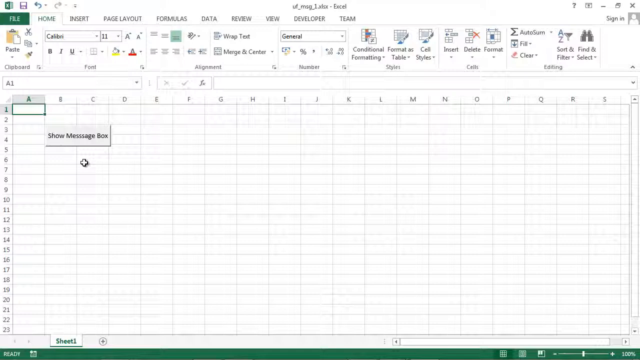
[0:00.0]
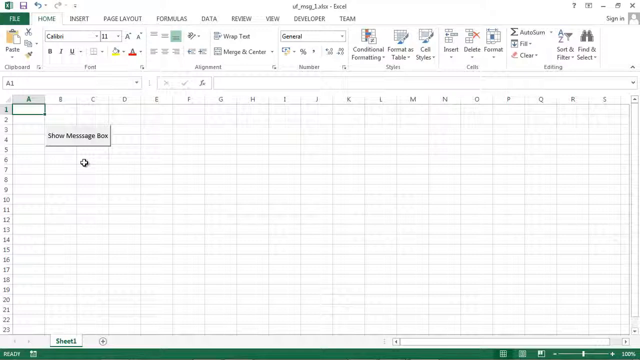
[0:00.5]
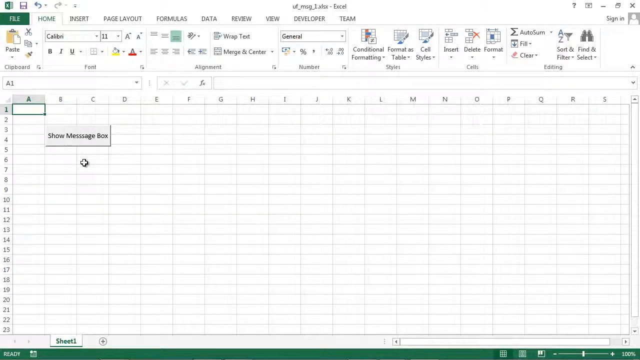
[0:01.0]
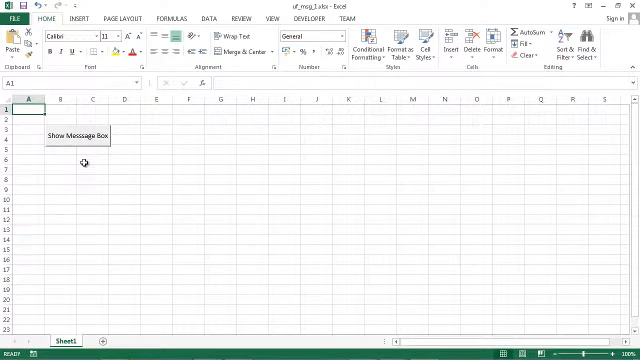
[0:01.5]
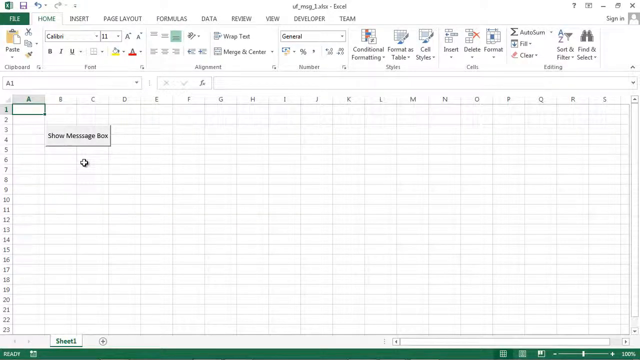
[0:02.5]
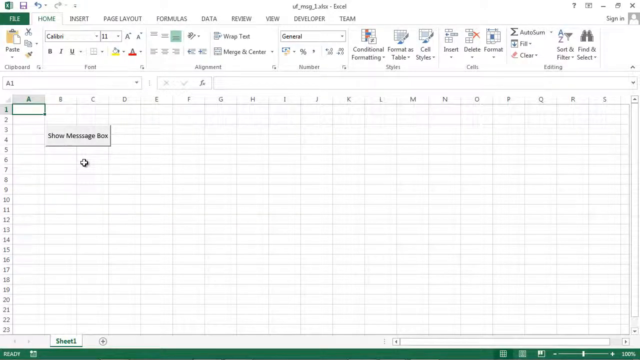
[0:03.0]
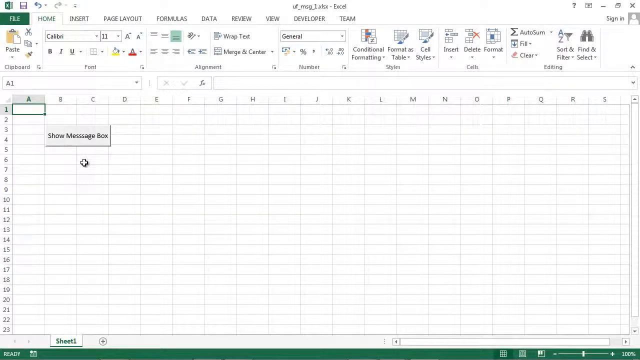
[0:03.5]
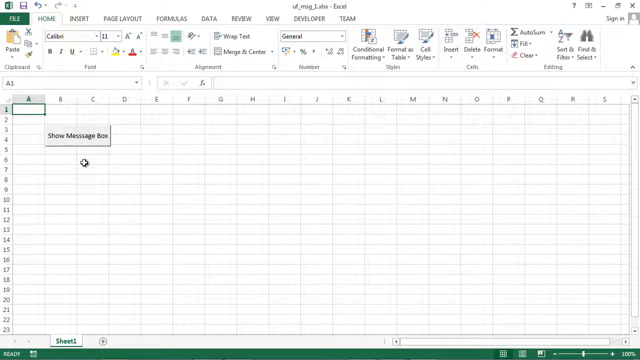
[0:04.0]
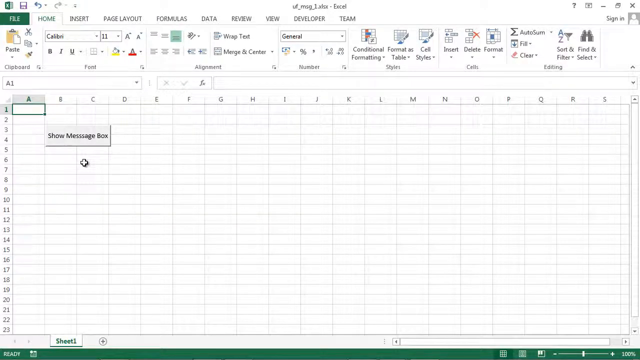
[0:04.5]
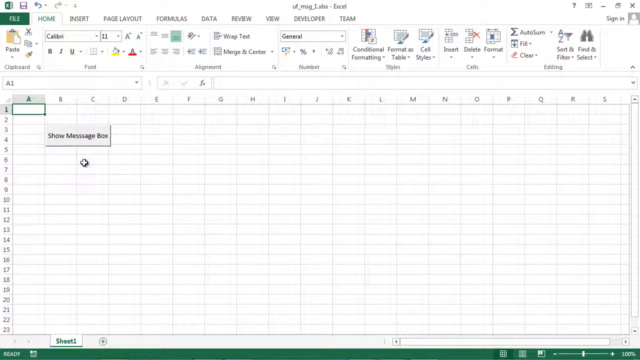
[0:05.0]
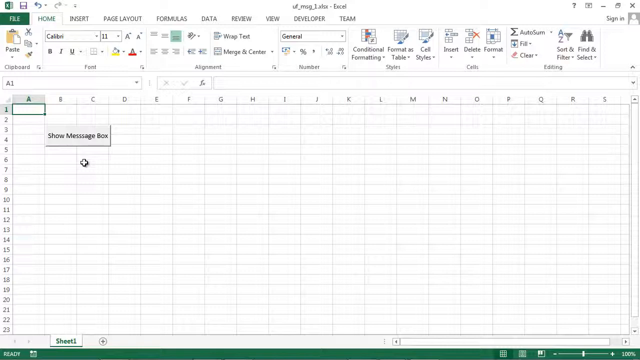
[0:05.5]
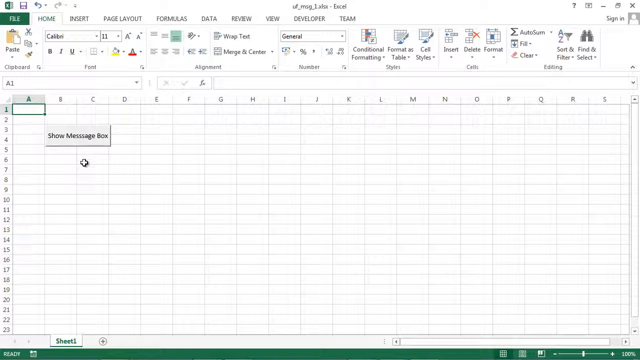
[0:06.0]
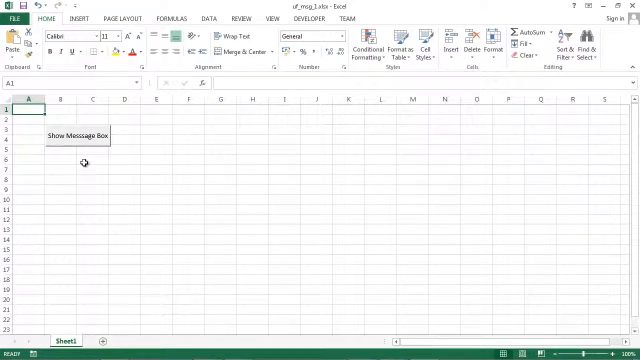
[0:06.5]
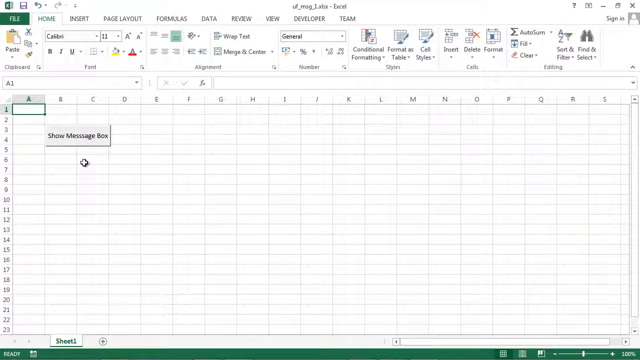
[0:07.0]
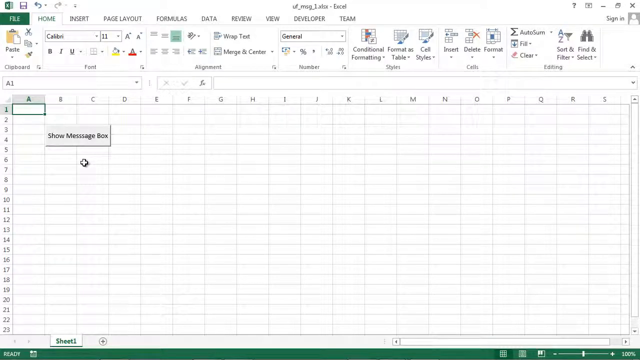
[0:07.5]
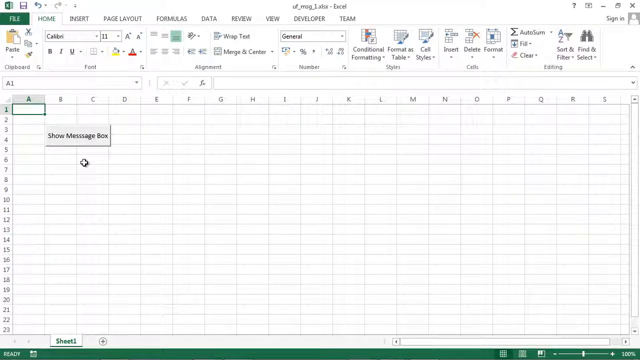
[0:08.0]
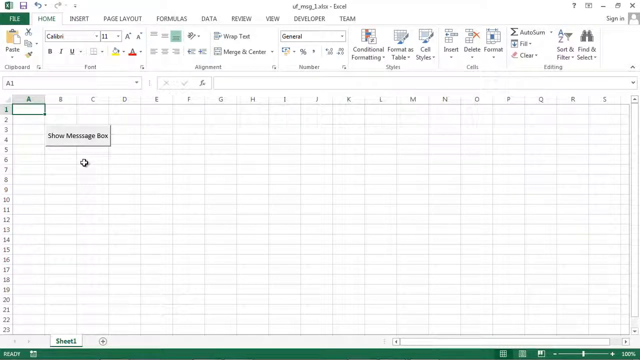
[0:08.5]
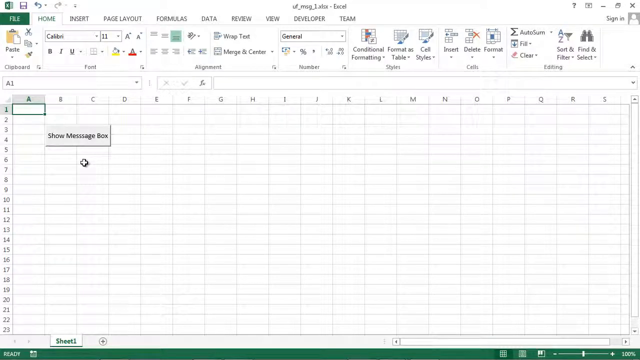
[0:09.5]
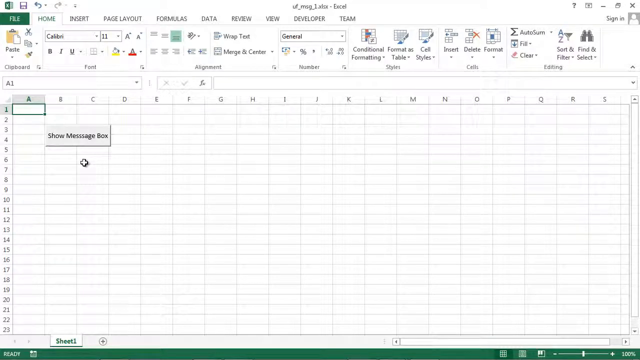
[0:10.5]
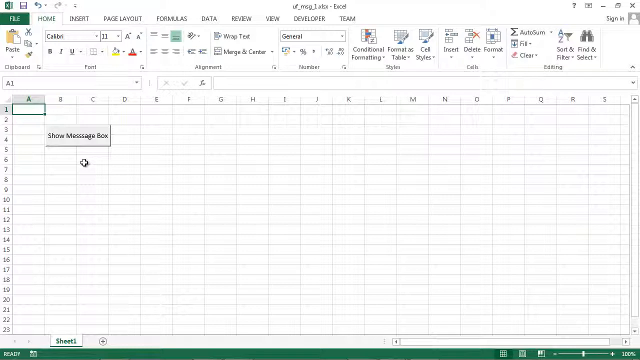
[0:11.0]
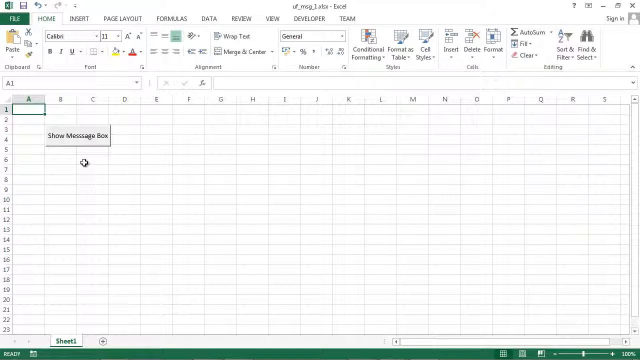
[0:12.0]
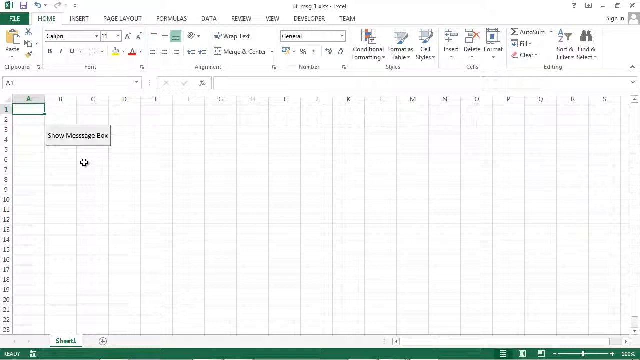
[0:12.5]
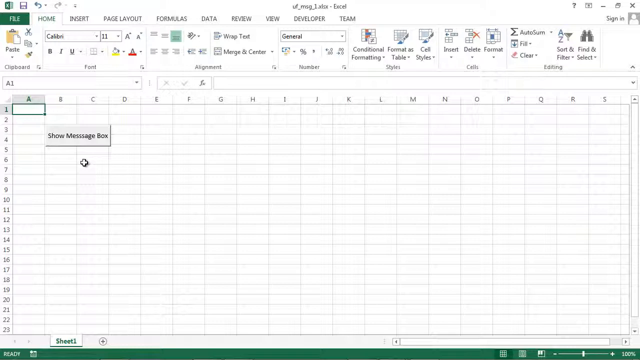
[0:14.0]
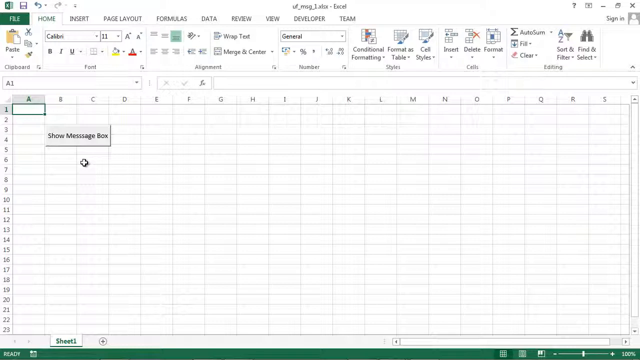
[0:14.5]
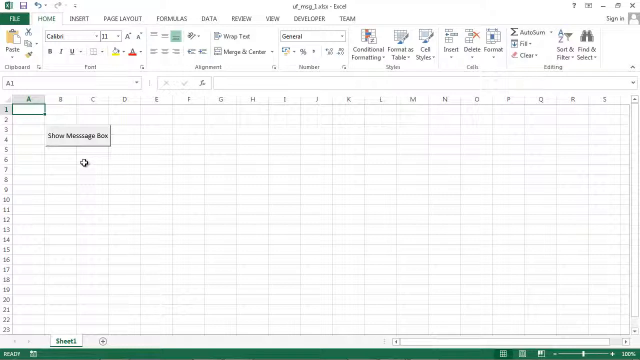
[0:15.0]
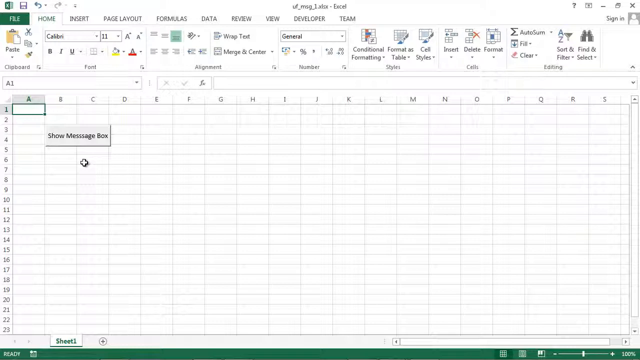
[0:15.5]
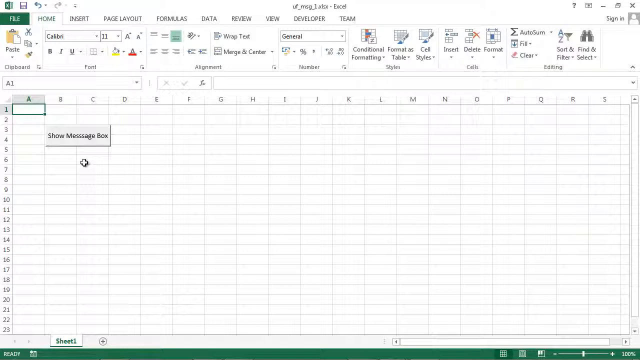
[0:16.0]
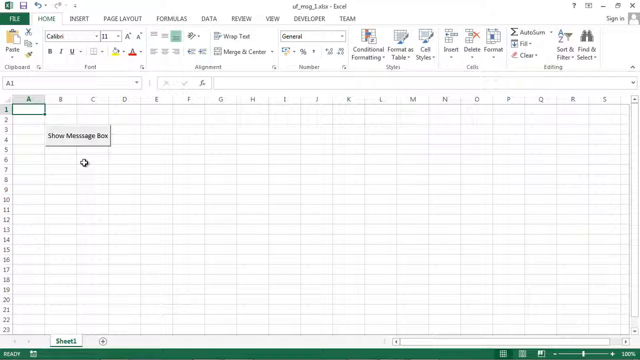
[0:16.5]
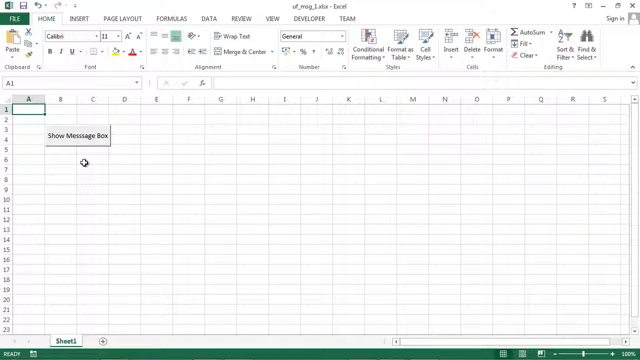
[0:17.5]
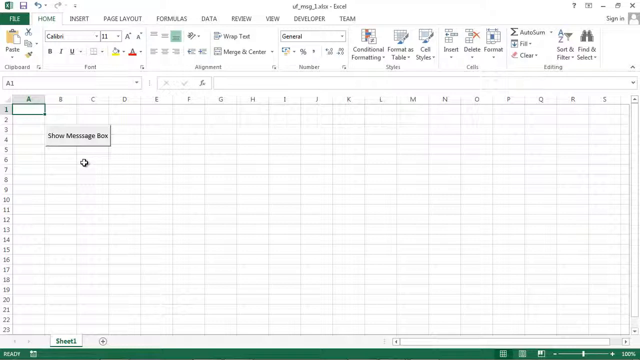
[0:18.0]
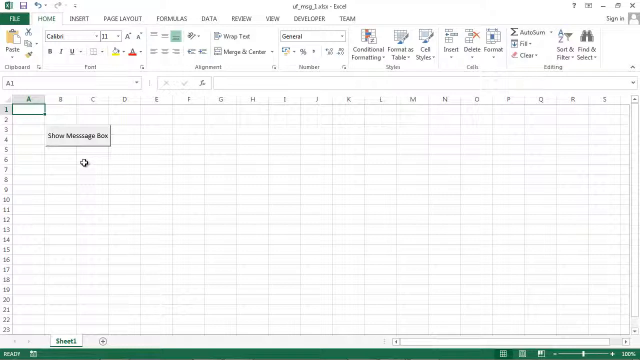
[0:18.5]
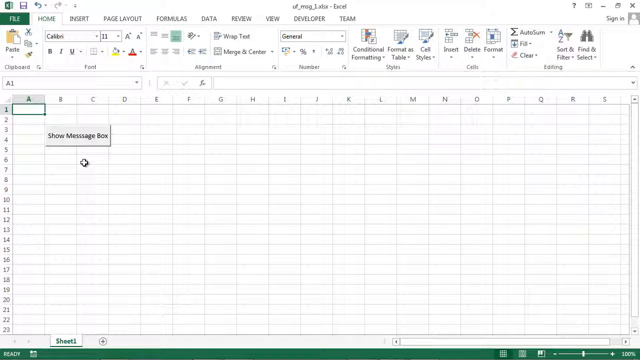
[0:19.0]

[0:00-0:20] Microsoft Excel is displayed, with its interface showing all of its tools and general tabs. At the bottom, Sheet 1 is shown, and a message box appears in the middle. The device has not signed in. Nothing has been edited, pasted, opened or drafted yet; the Excel page is empty and clear, with nothing added and no file to print or work on. At the top, a setting is on 11, and everything else is still at default. The tabs are empty and no steps have been taken.